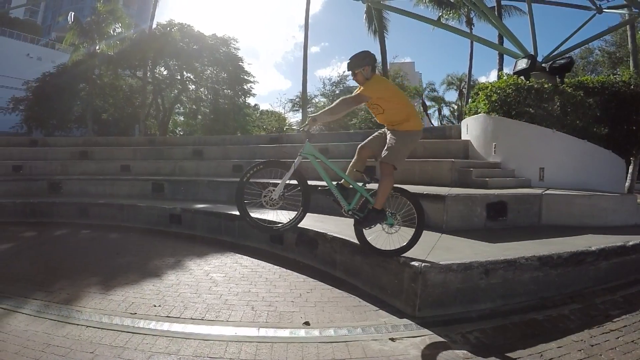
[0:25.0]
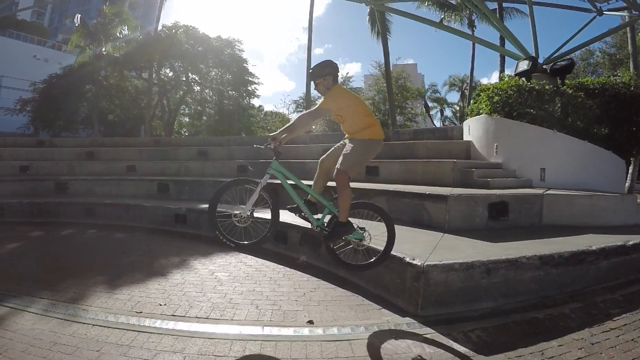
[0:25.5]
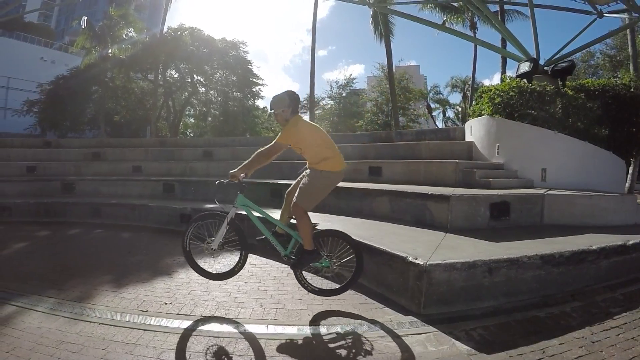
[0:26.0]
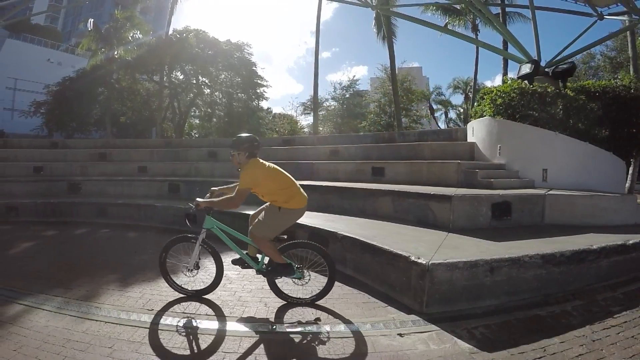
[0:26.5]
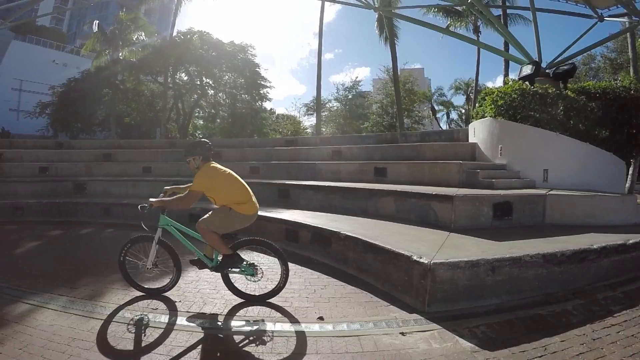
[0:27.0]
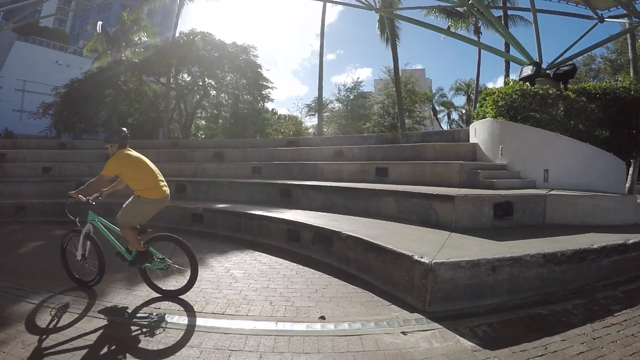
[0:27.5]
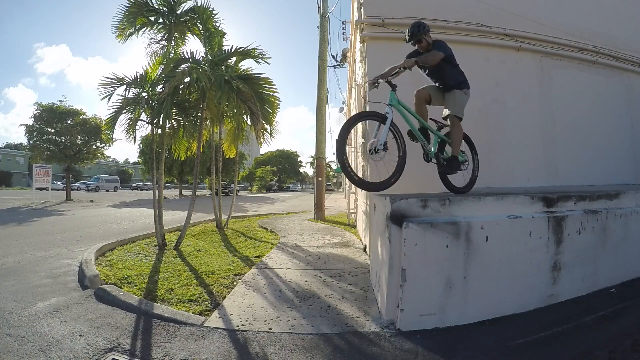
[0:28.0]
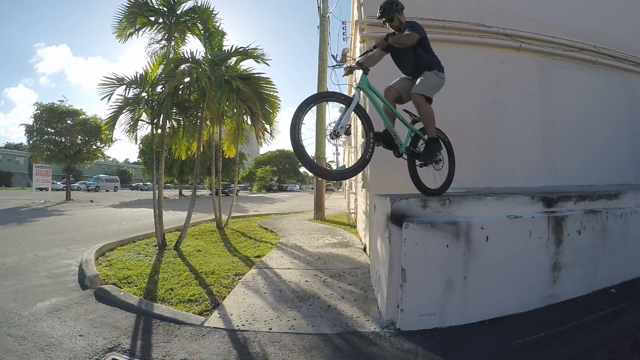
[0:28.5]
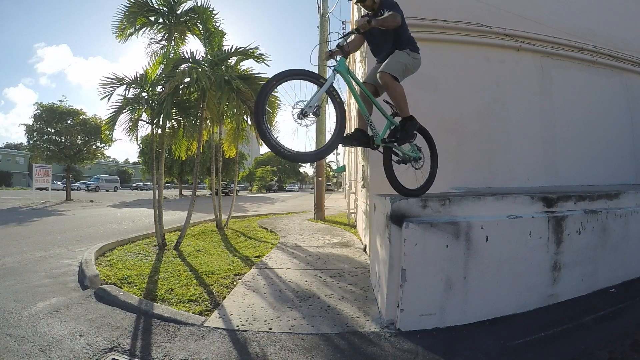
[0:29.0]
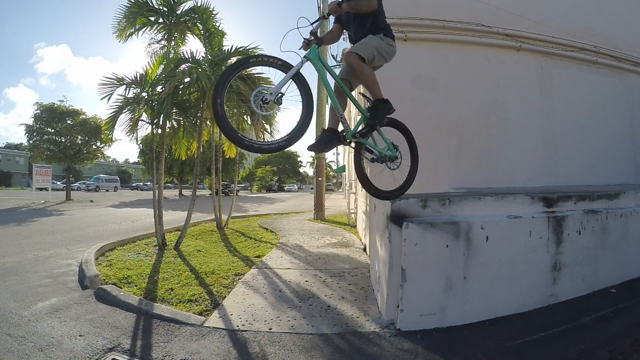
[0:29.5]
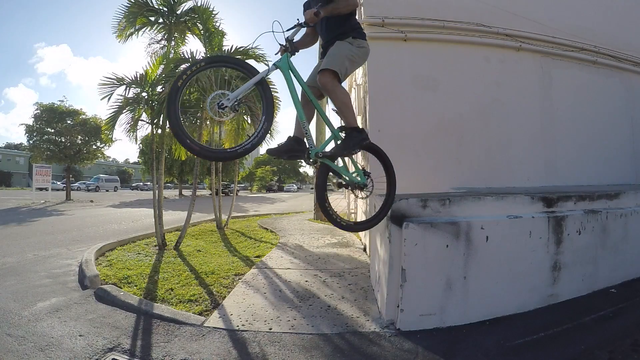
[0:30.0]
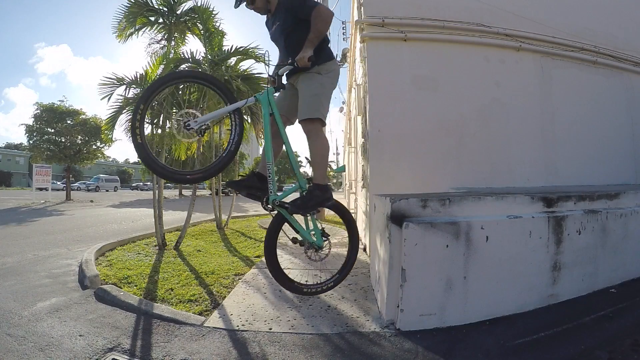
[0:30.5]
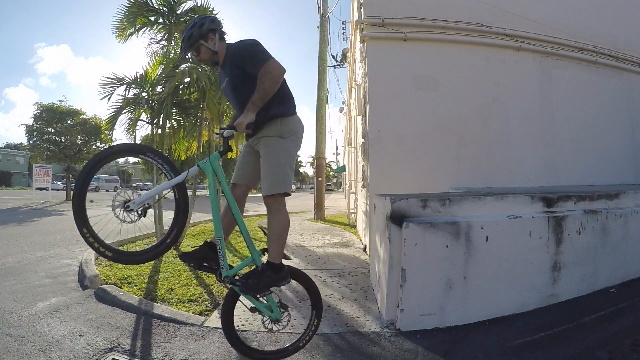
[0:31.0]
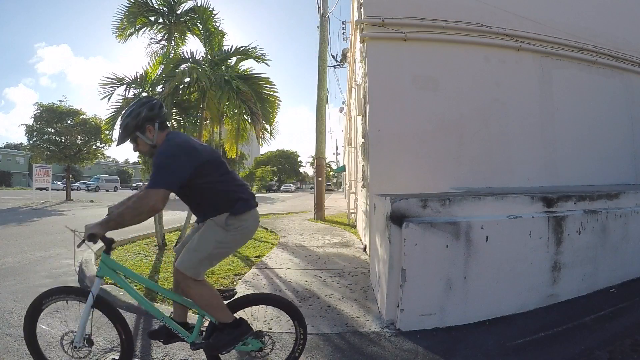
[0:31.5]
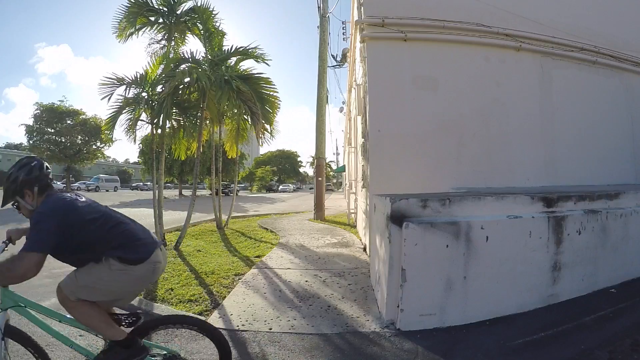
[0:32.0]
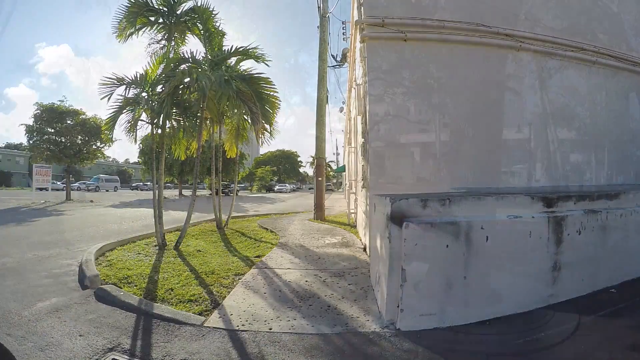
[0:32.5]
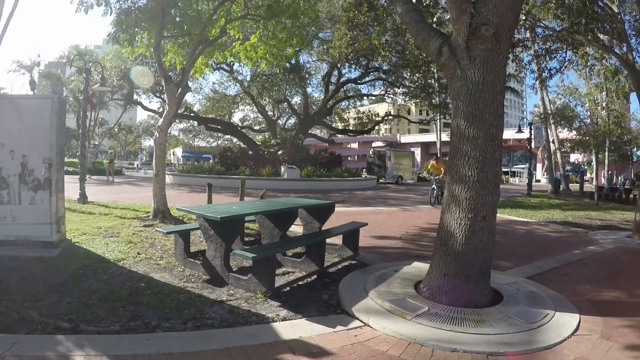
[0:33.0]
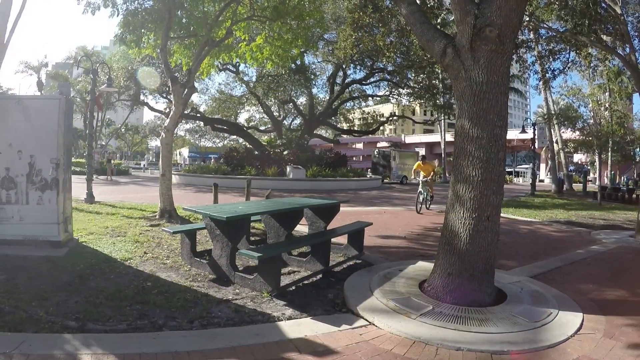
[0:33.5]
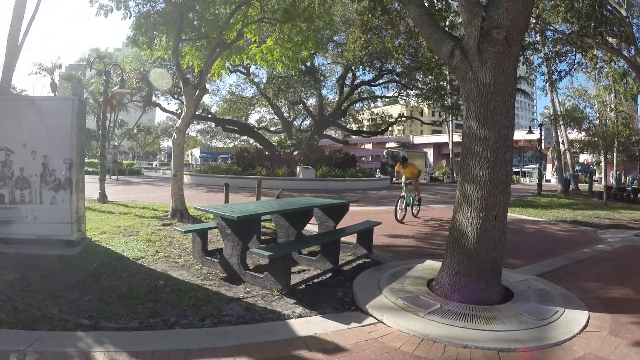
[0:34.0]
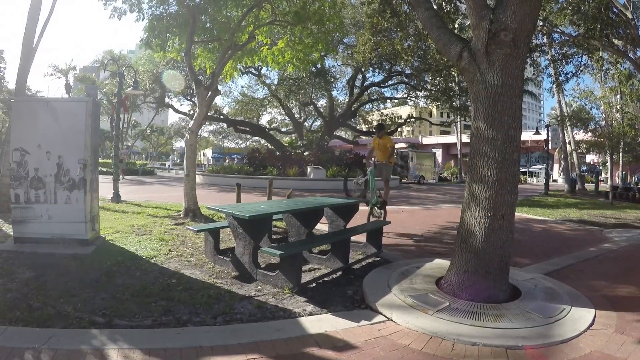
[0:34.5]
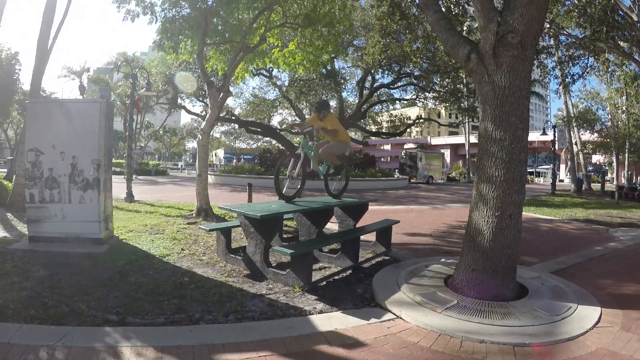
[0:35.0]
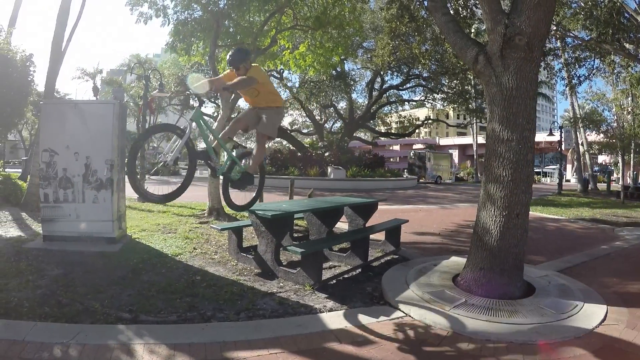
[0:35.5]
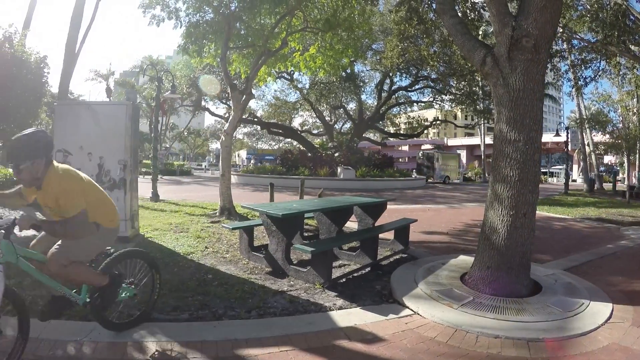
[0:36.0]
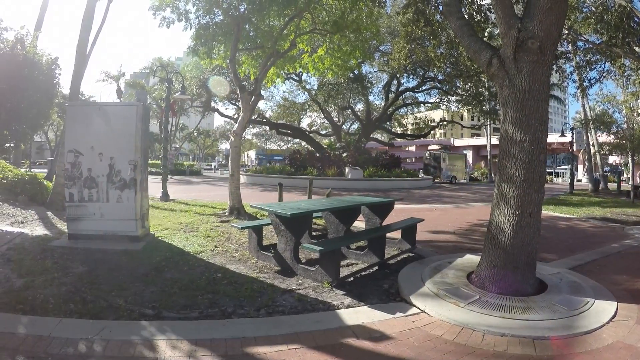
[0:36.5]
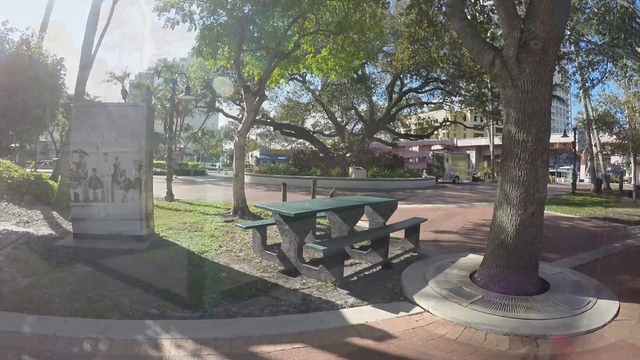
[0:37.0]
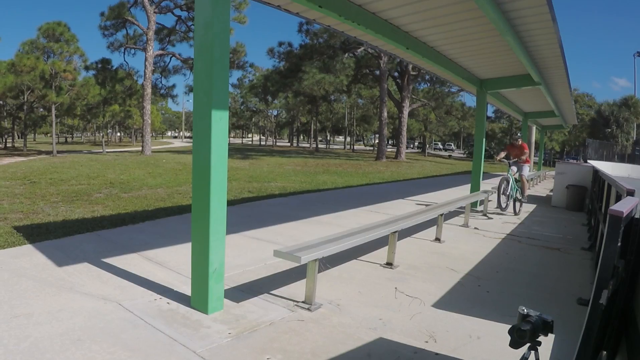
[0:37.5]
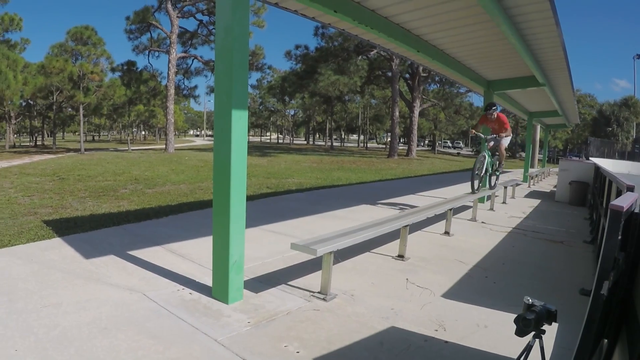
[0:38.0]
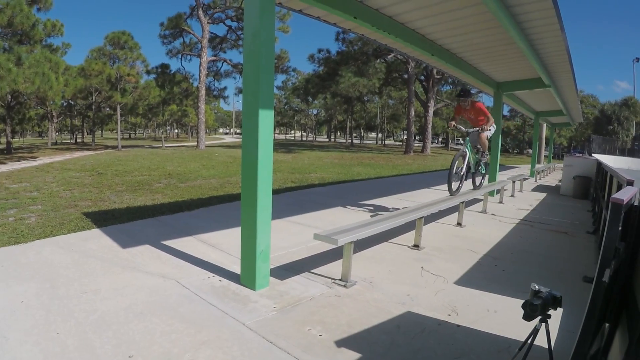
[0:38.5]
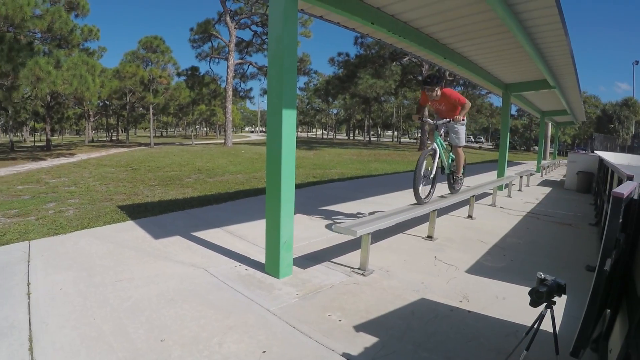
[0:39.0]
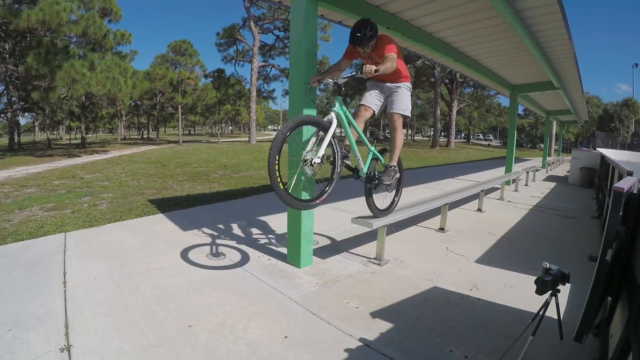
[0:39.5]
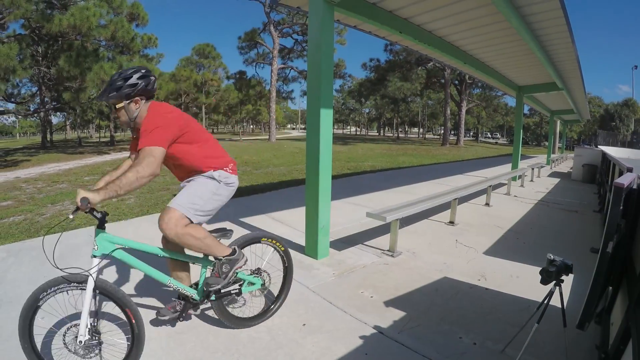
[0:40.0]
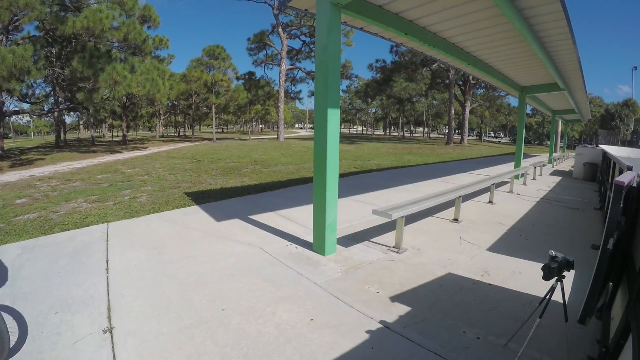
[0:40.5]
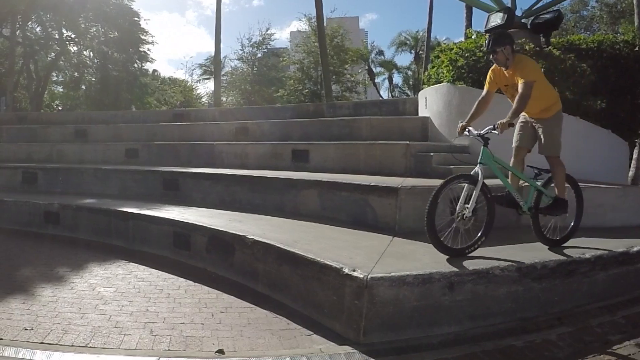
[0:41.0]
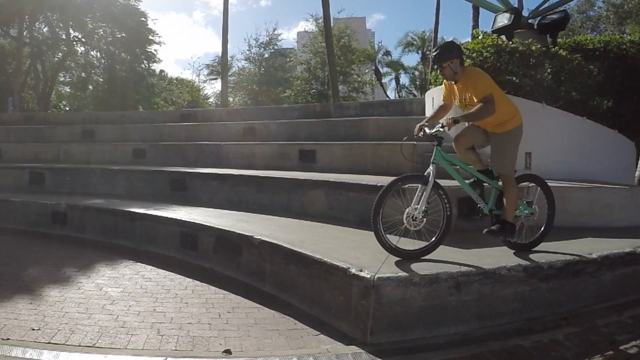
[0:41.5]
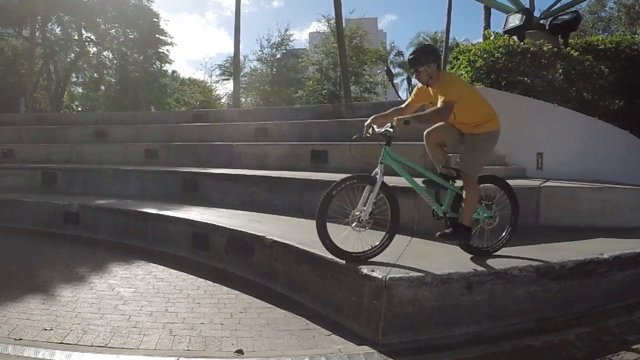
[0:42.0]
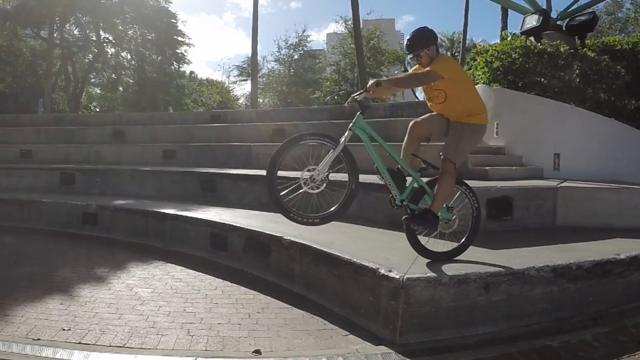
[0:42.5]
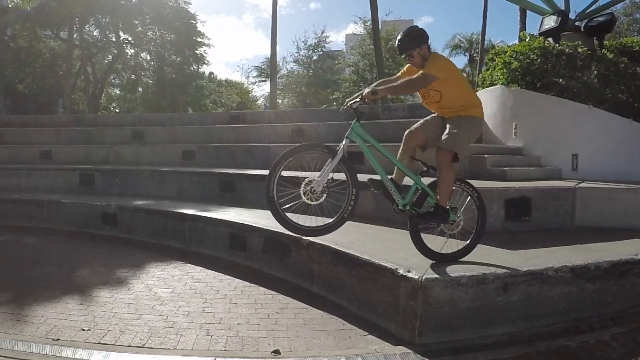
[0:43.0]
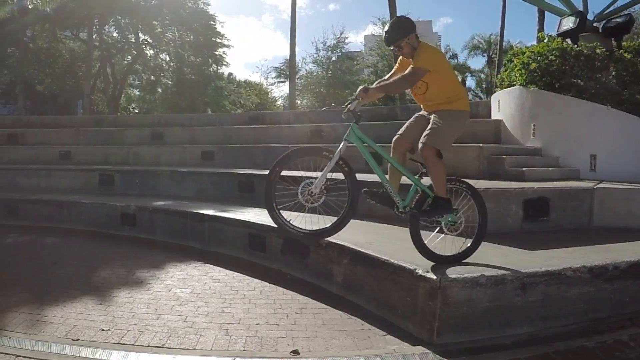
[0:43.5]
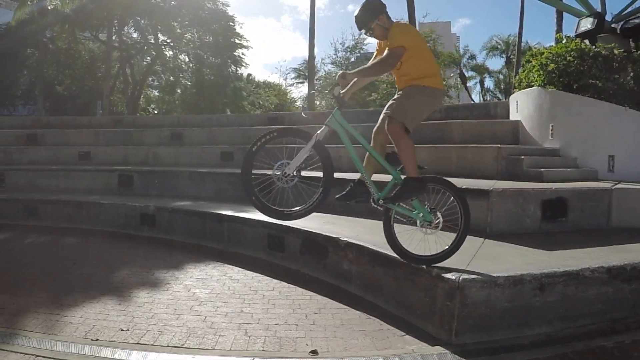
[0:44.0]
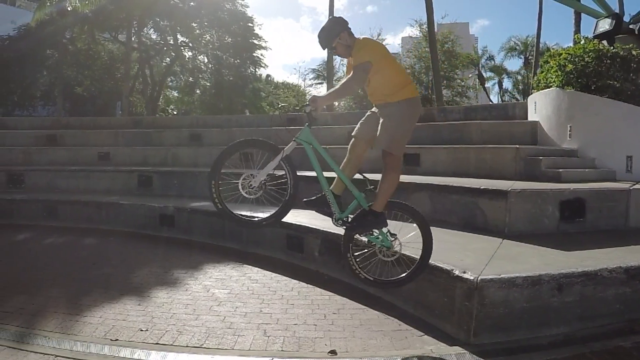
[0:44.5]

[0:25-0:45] A montage shows a man on a green bicycle performing various jumps, in both live-action and slow-motion scenes. First, in slow motion, he jumps from concrete steps onto a brick pavement. Next, he jumps from a concrete structure approximately three feet high. He then jumps onto an outdoor picnic table in what seems to be a residential area. Finally, he jumps onto a bench approximately one and a half to two feet high and travels along the base of the bench in what looks like an outdoor park.